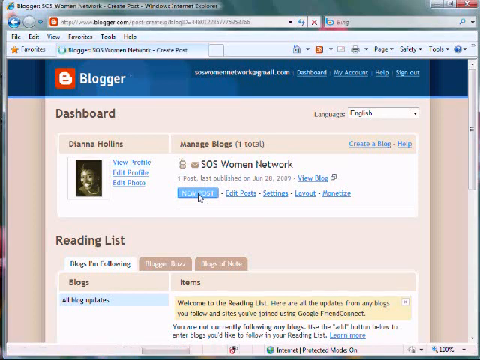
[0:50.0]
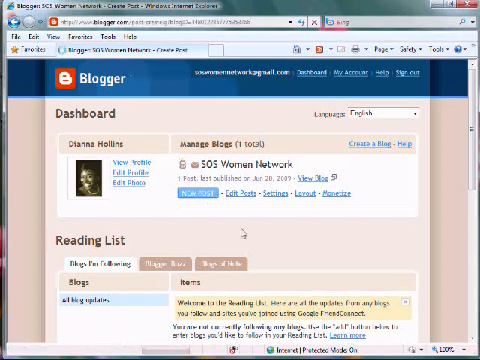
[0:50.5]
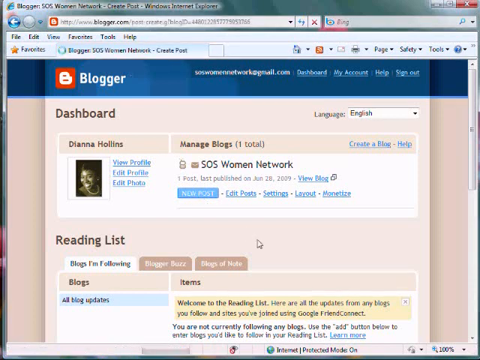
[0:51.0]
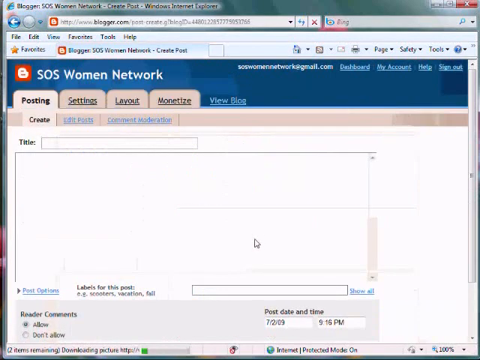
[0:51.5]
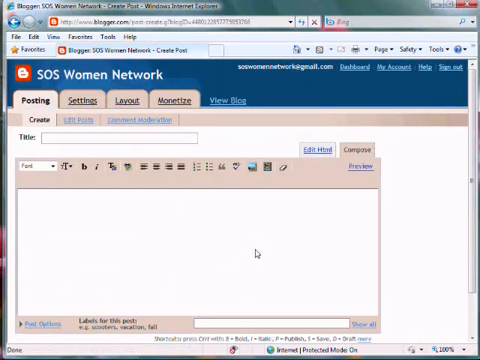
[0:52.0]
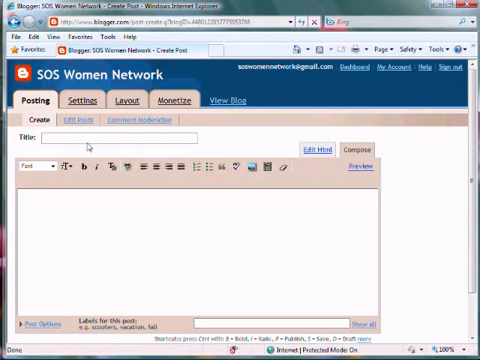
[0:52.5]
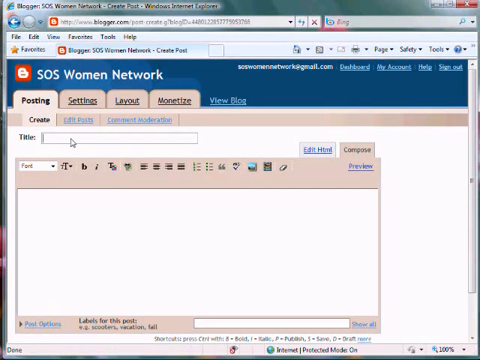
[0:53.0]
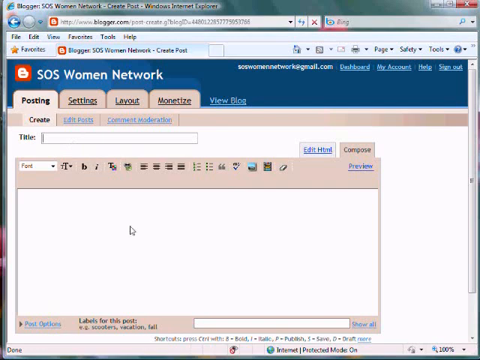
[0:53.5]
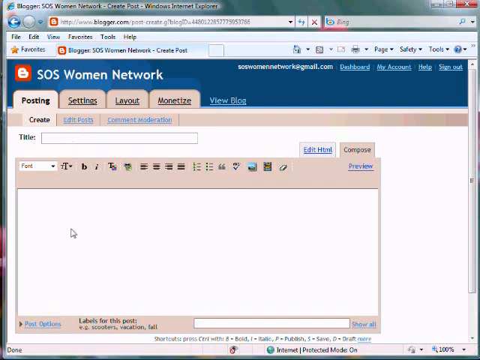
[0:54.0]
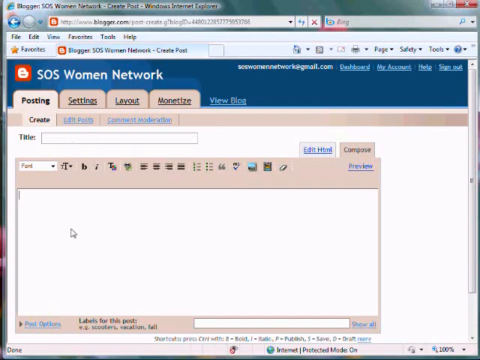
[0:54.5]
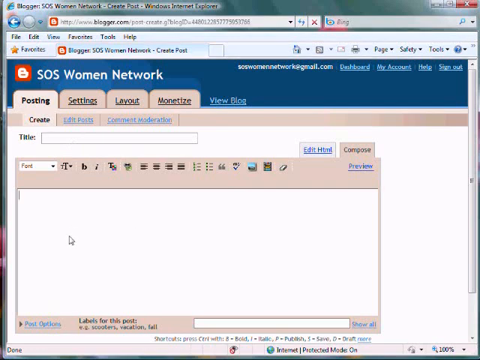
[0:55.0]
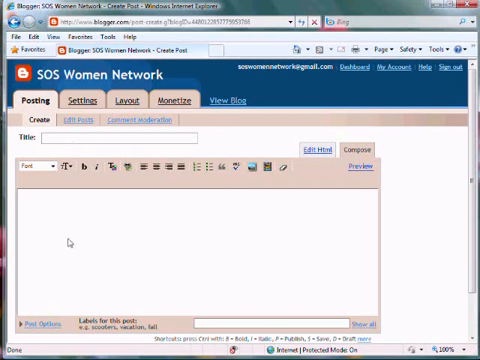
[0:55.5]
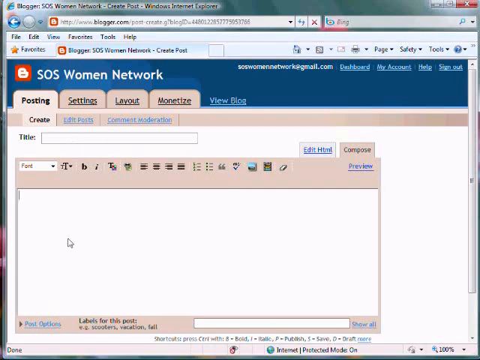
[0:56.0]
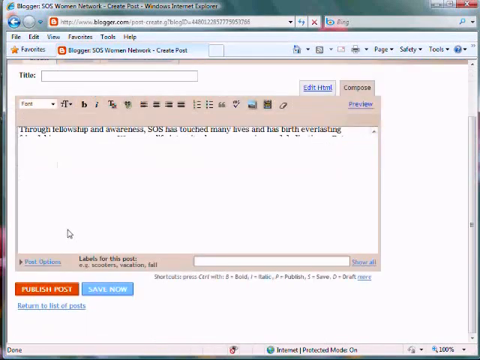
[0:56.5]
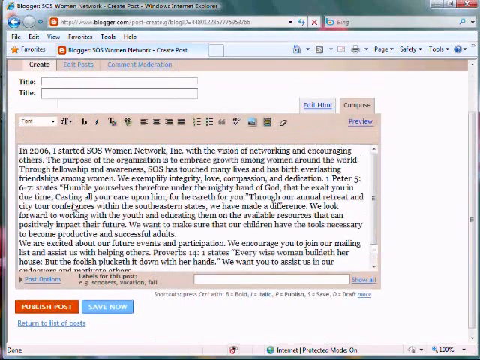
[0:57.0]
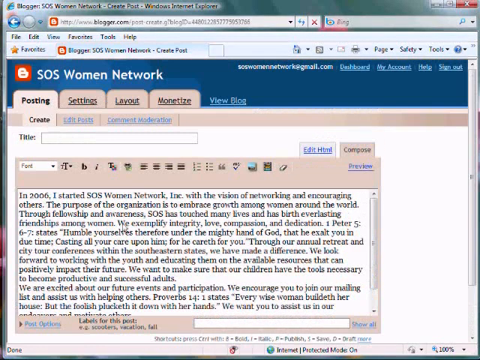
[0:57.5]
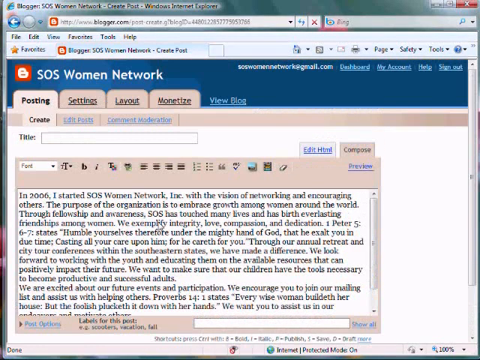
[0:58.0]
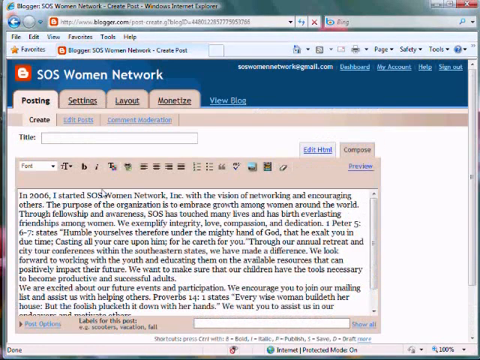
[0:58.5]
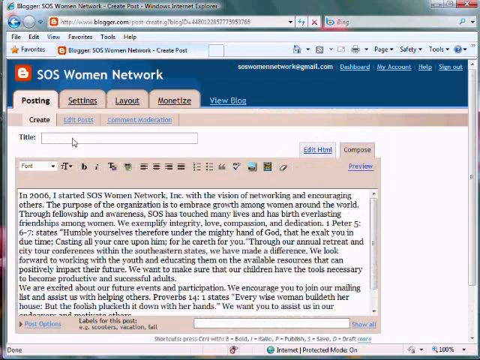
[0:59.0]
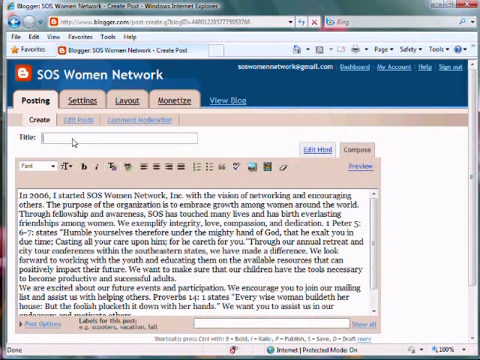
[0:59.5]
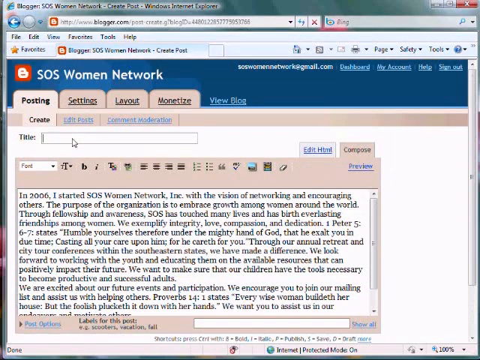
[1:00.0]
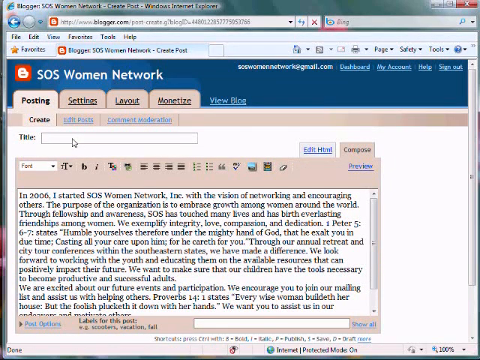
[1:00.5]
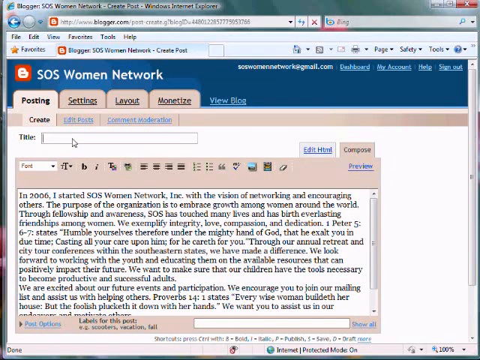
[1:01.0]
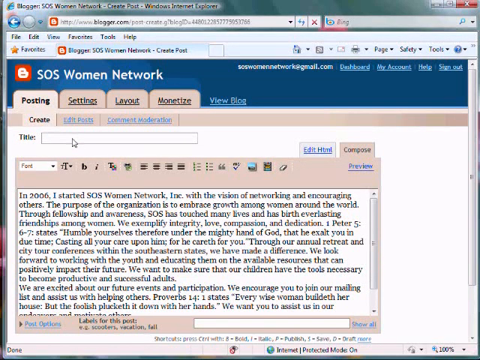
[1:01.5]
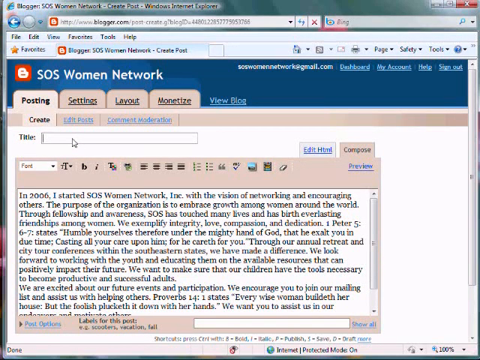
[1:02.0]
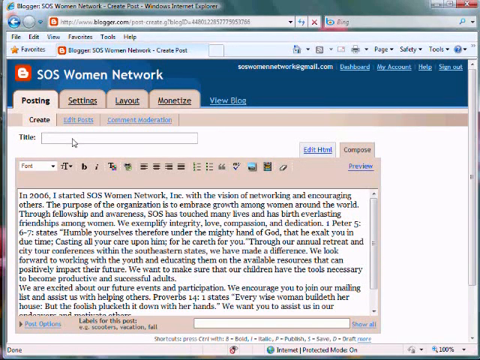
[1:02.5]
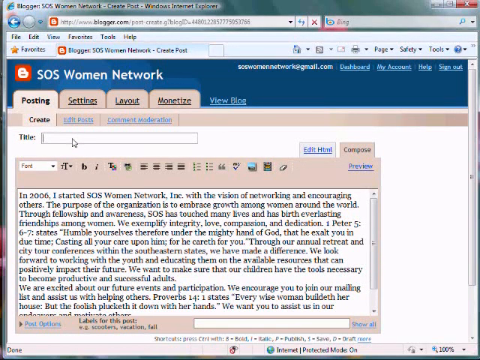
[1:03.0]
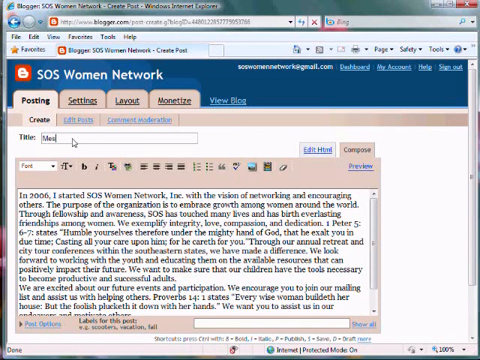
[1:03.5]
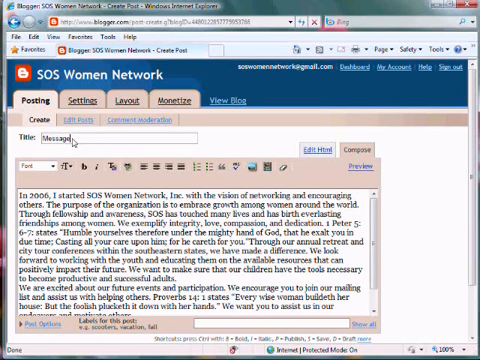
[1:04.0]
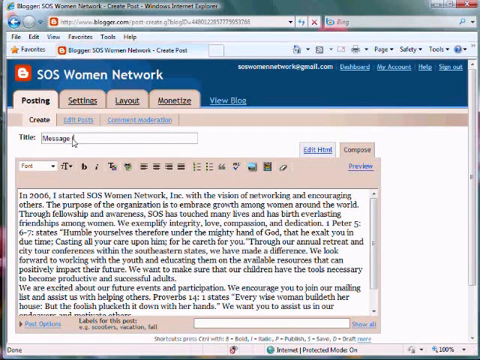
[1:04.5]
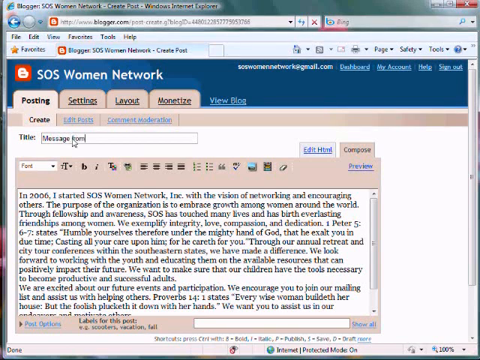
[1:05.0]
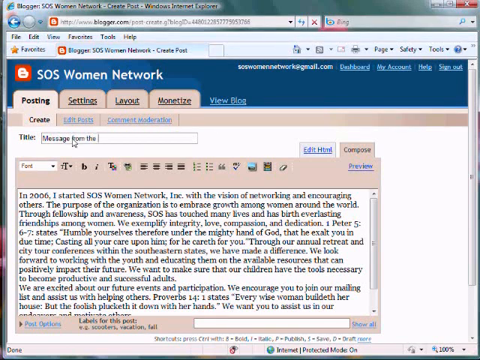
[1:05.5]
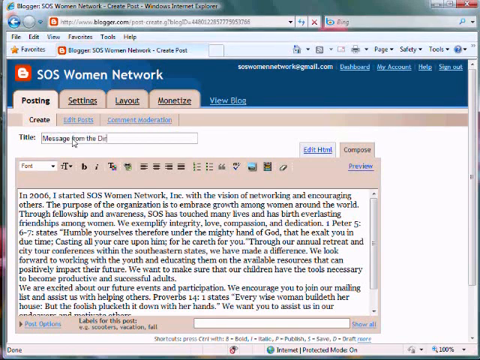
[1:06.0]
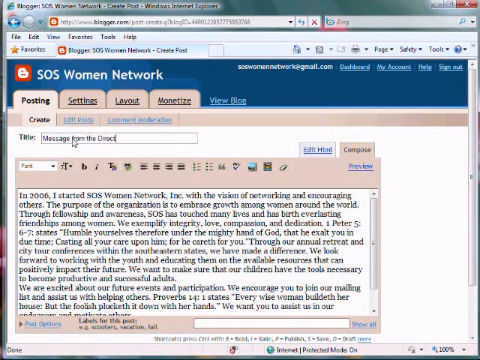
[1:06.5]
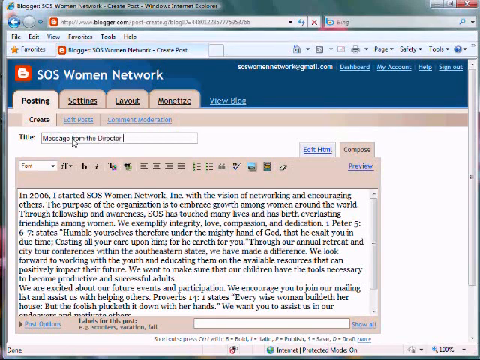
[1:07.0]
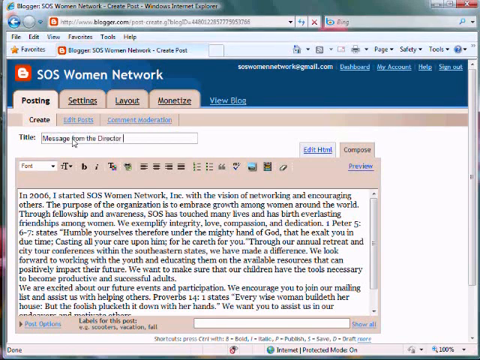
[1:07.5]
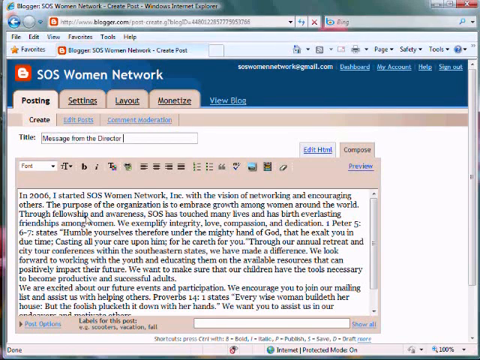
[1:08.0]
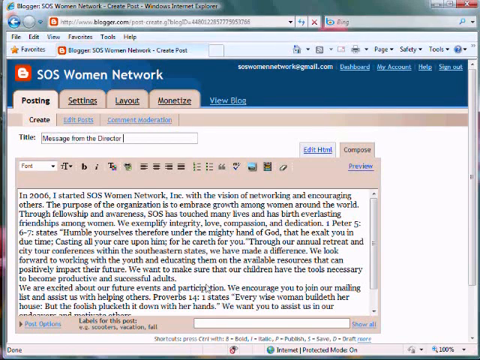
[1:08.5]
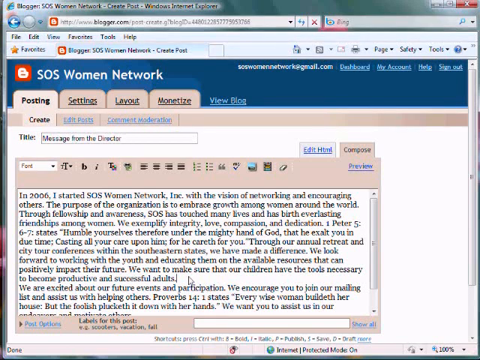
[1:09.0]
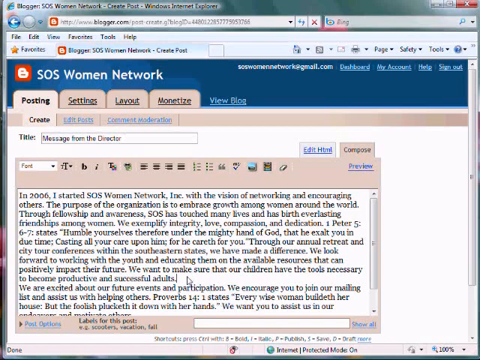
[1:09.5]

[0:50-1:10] After the click on New Post, a new page opens for creating a post on the SOS Women Network blog. In the top navigation bar the Posting tab is open, with other tabs for Settings, Layout, Monetize, and View Blog; beneath the Posting tab are Create, Edit Post, and Comment Moderation. The page has a title box and a body input box. When the user clicks into the body input box, a large body of text appears in it, seemingly pasted from the clipboard. They then click into the title input box, where the cursor blinks for a moment before they type "message from the director". In the body input box the Compose tab is open, with another tab available for editing the HTML. After entering the title, the user clicks into the body input box at the end of a paragraph and adds a new line to insert a break between the two paragraphs.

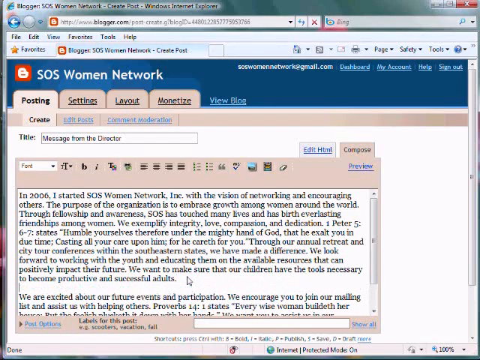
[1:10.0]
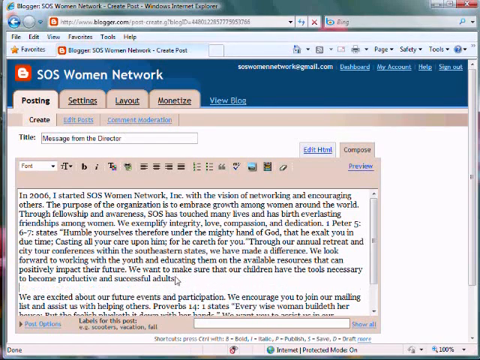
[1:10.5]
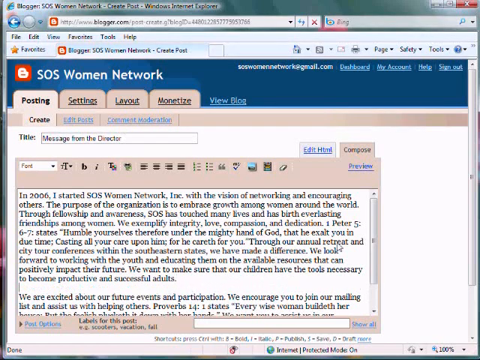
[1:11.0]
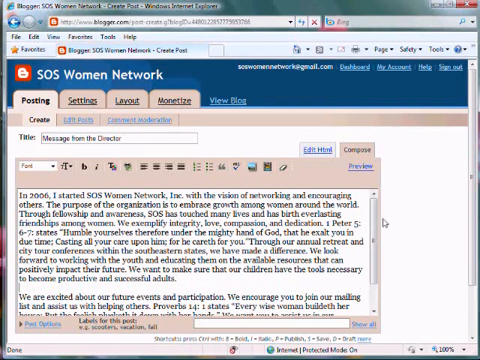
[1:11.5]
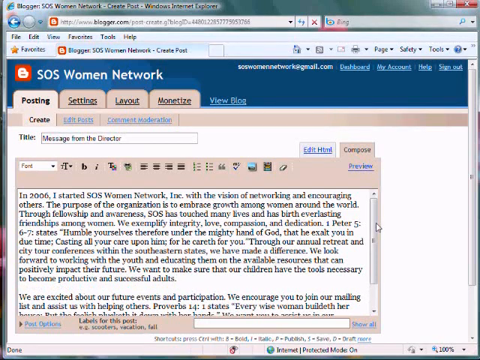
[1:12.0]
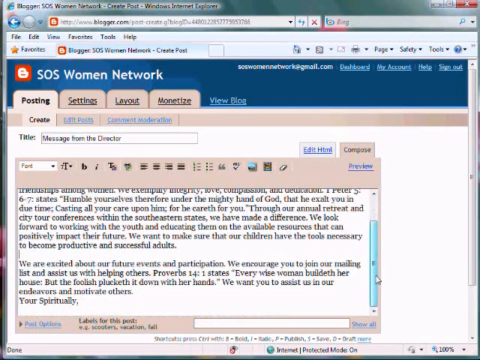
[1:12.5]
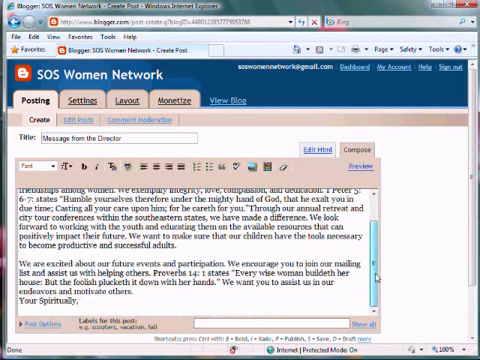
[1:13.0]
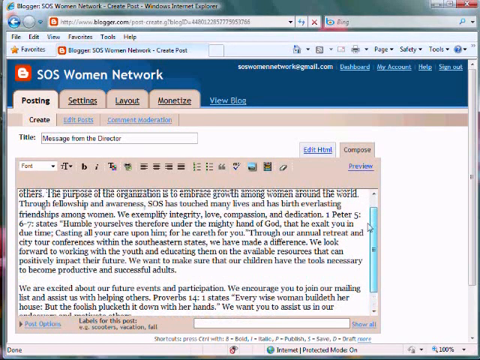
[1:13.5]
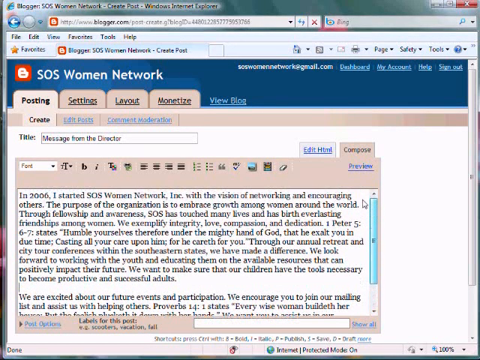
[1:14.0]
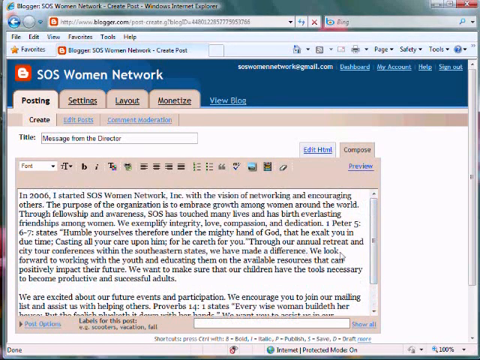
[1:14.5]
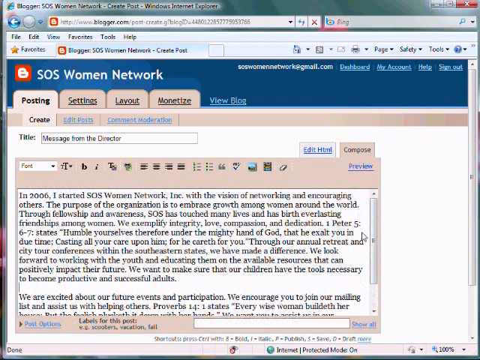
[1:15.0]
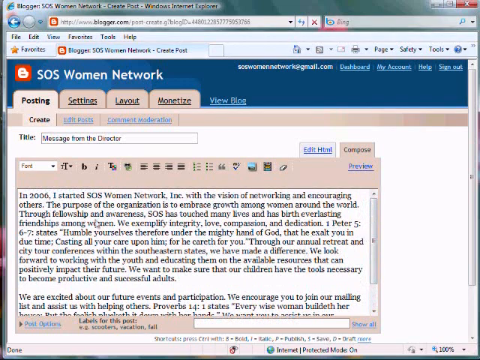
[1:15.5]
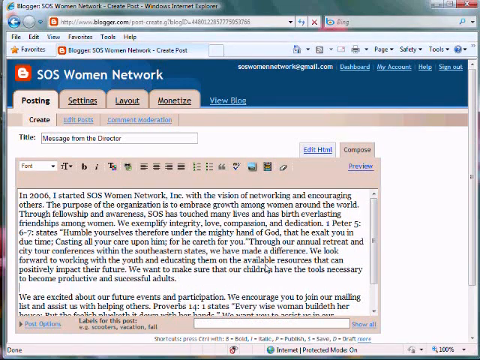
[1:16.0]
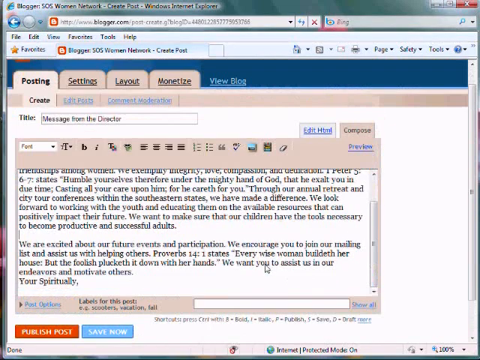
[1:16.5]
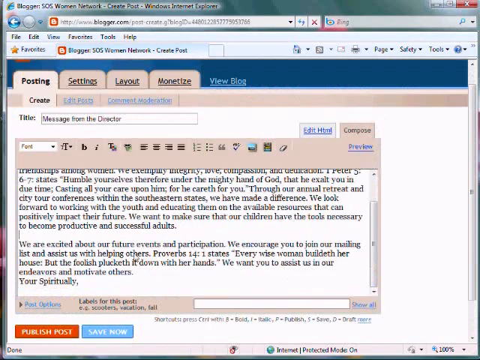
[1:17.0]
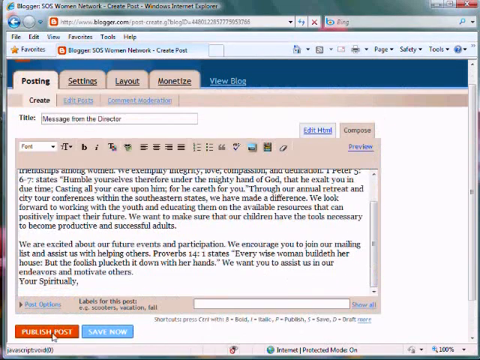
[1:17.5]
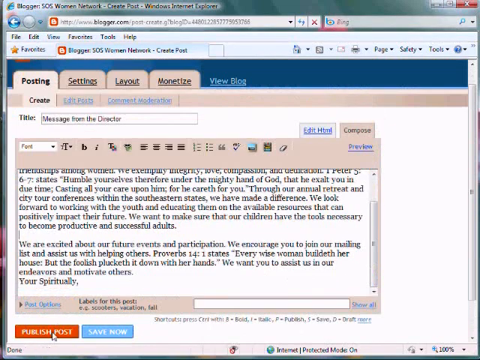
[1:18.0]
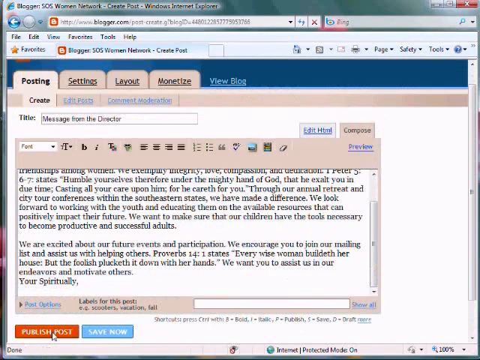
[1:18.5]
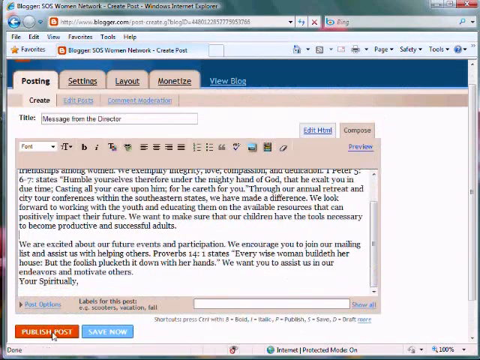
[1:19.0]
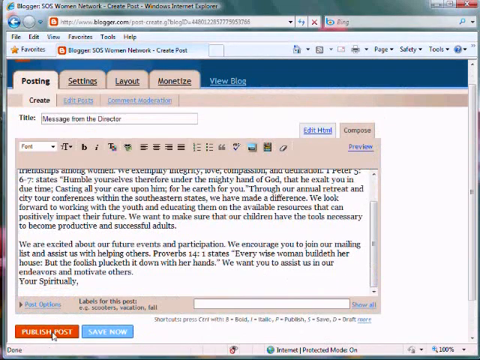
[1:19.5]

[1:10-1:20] With a new line added between the two paragraphs, the user hovers over the body input box's scroll bar and scrolls all the way down, showing the two paragraphs, then scrolls back up and down again. The first paragraph is significantly longer than the second. The first paragraph seems to describe how the SOS Women Network was started and its purpose and goal, while the second describes what they are excited for, encourages readers to sign up for the mailing list, and includes some Bible verses.